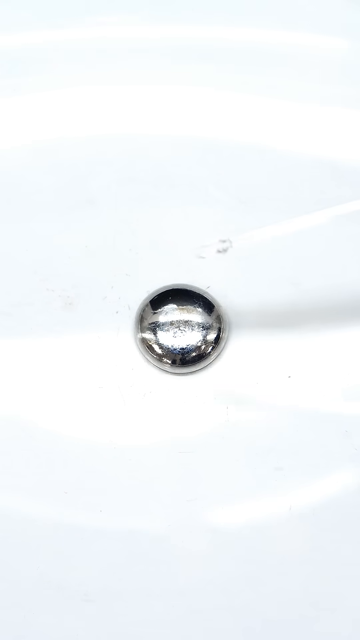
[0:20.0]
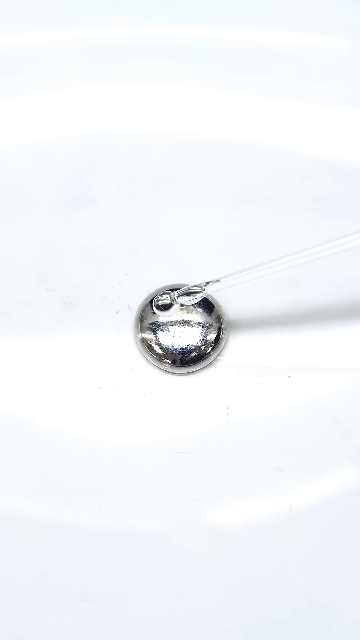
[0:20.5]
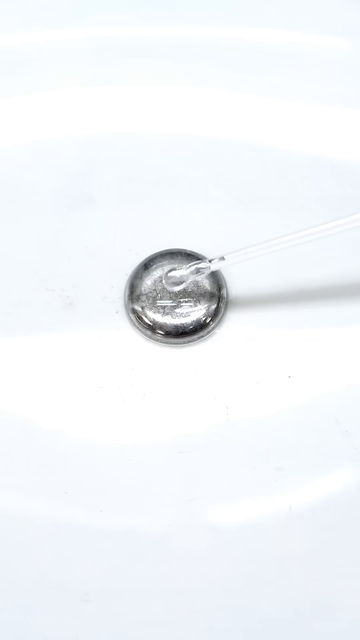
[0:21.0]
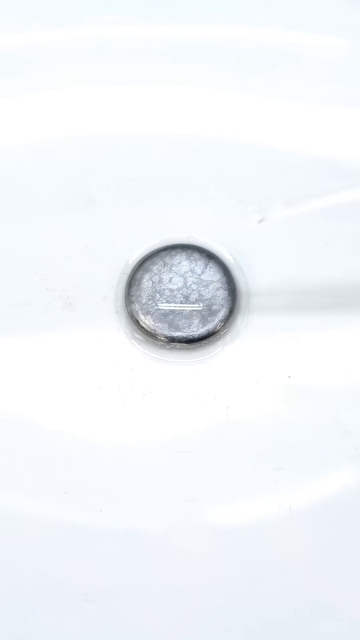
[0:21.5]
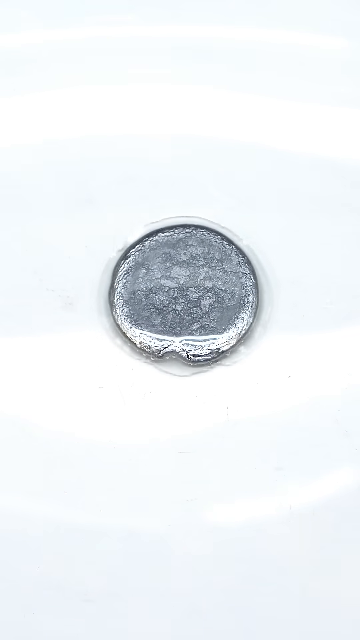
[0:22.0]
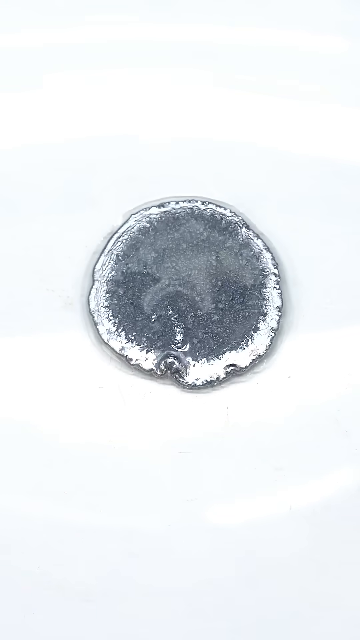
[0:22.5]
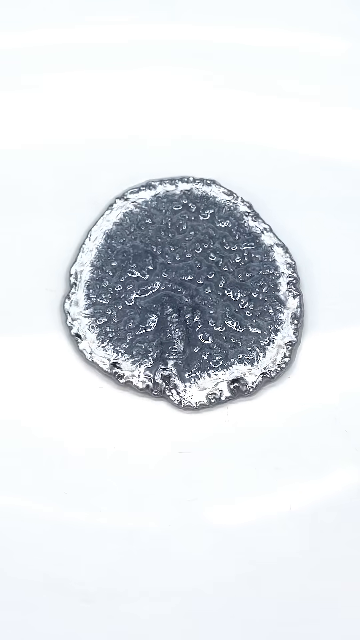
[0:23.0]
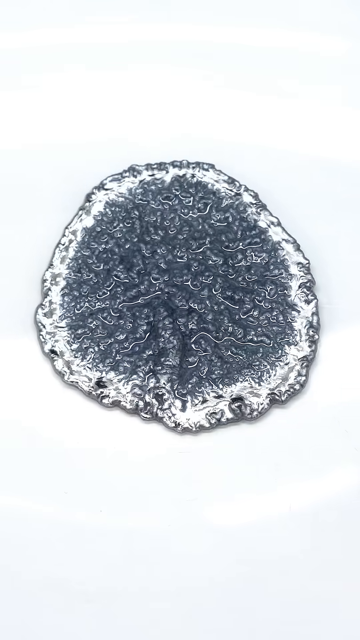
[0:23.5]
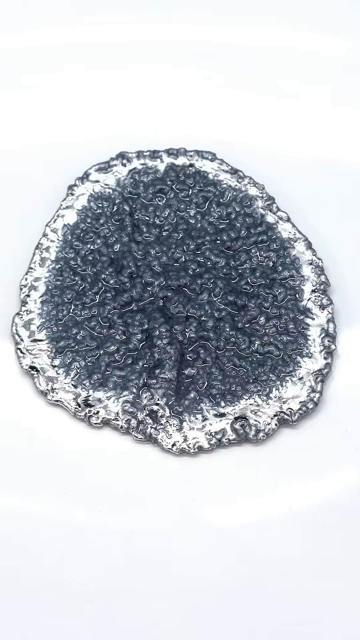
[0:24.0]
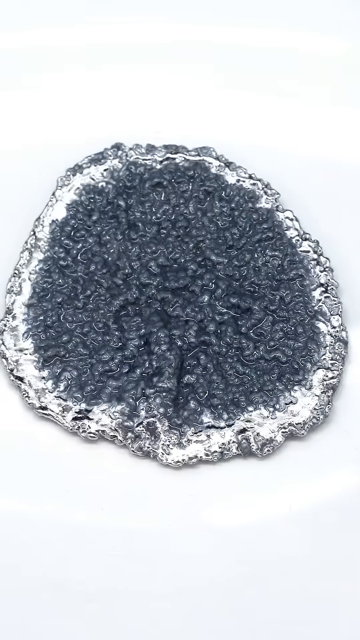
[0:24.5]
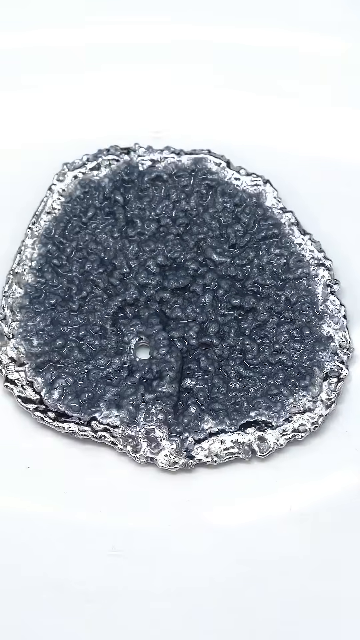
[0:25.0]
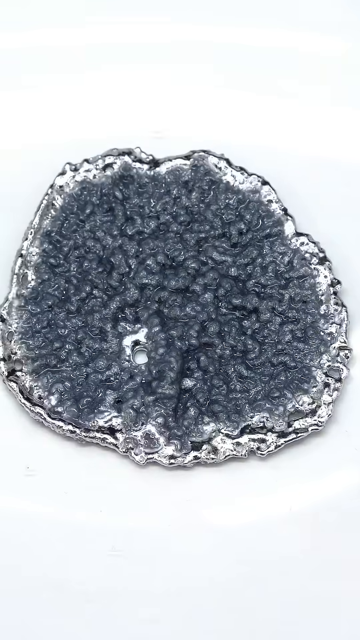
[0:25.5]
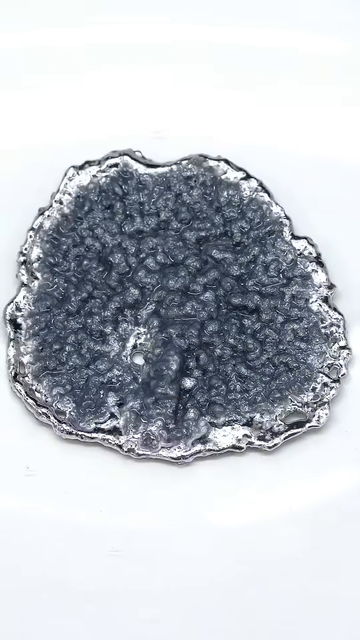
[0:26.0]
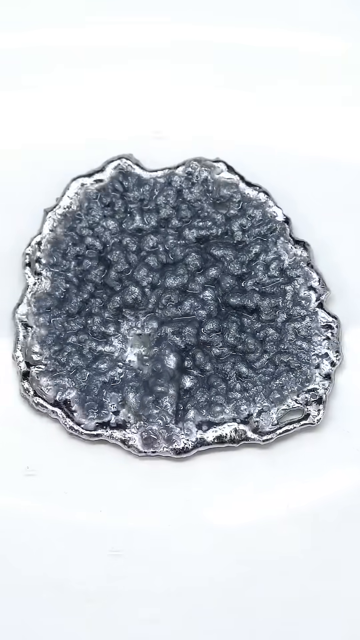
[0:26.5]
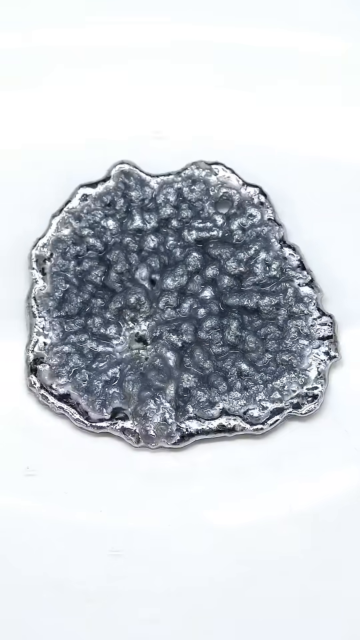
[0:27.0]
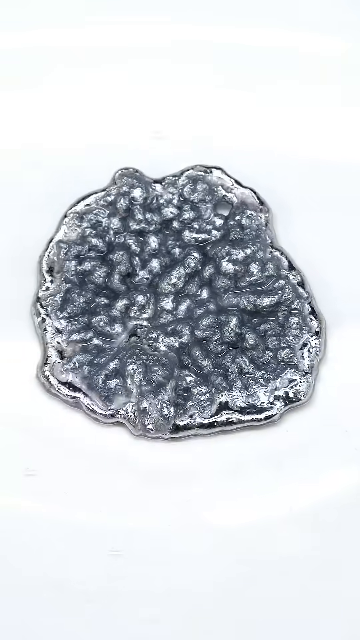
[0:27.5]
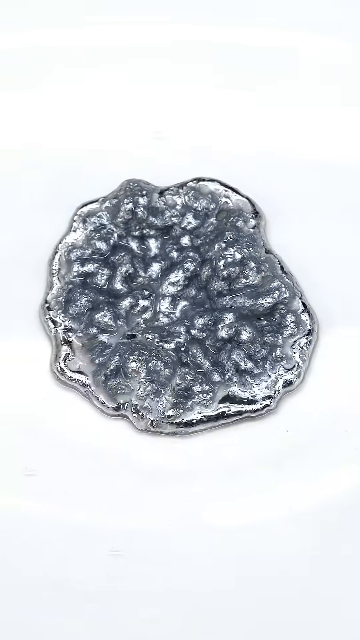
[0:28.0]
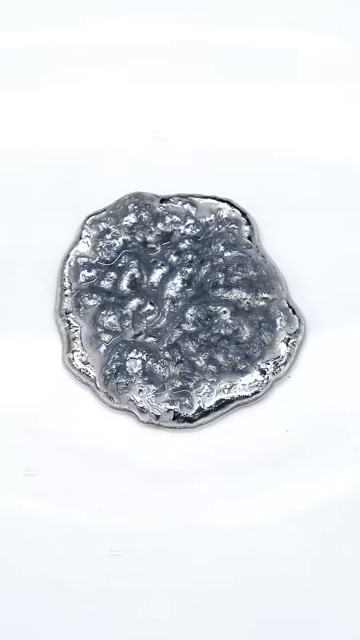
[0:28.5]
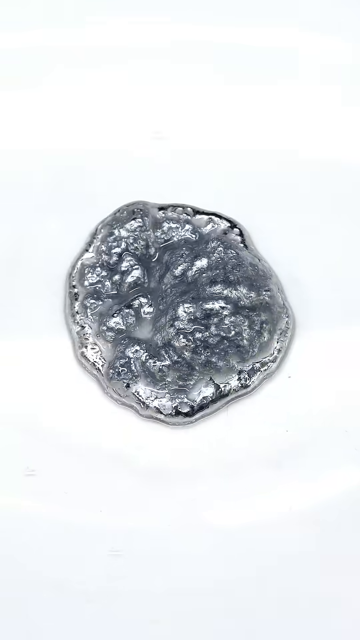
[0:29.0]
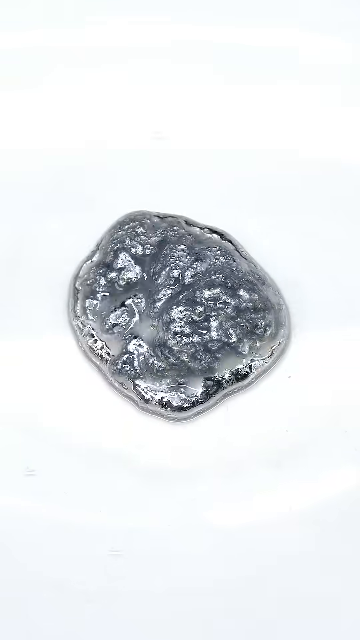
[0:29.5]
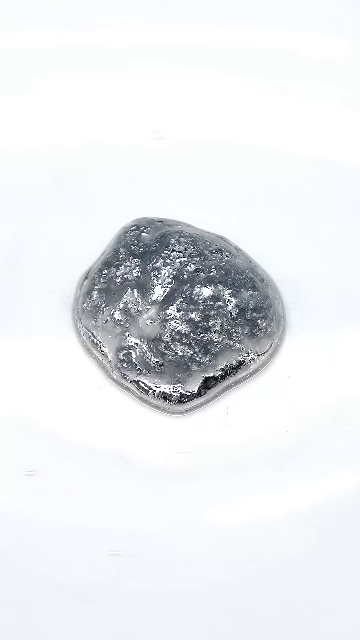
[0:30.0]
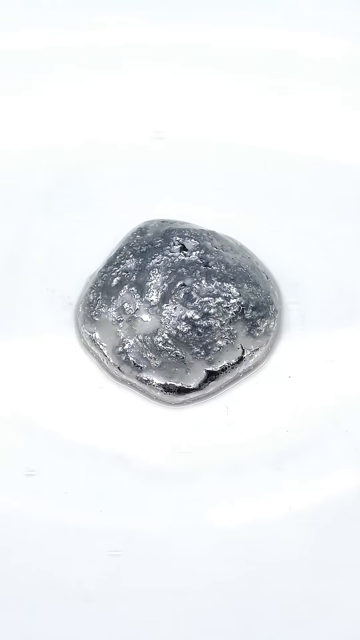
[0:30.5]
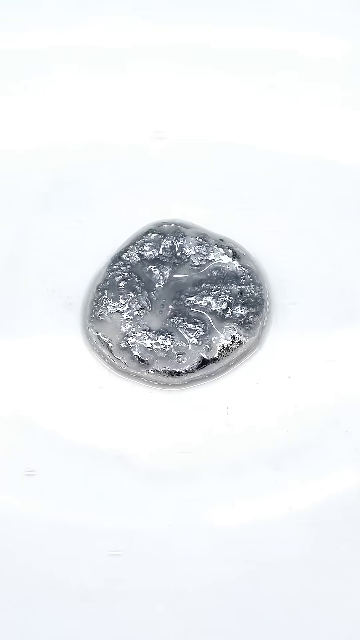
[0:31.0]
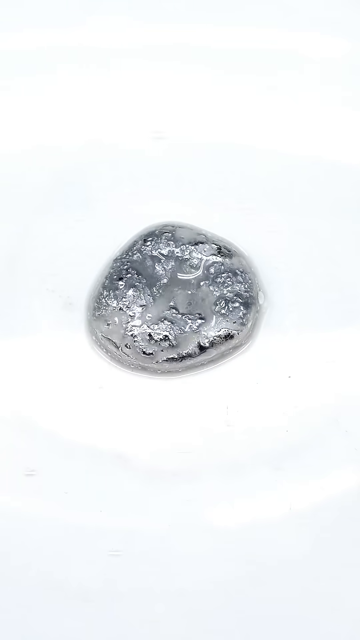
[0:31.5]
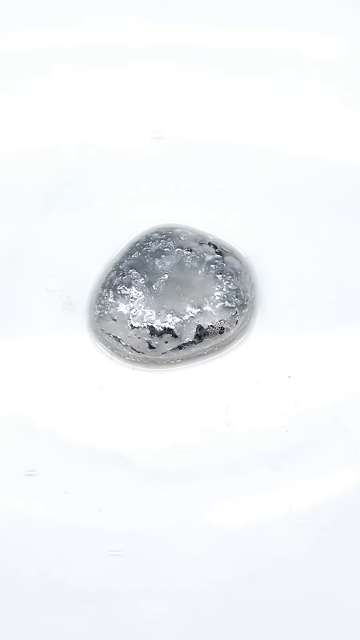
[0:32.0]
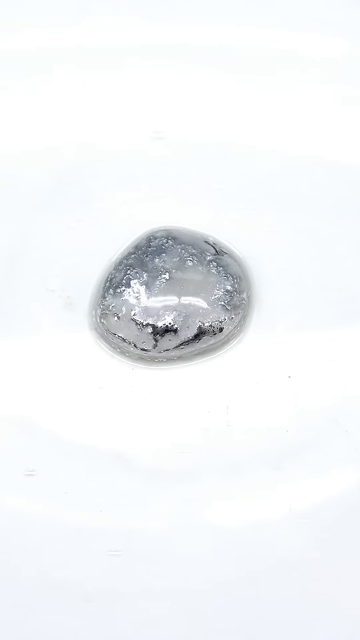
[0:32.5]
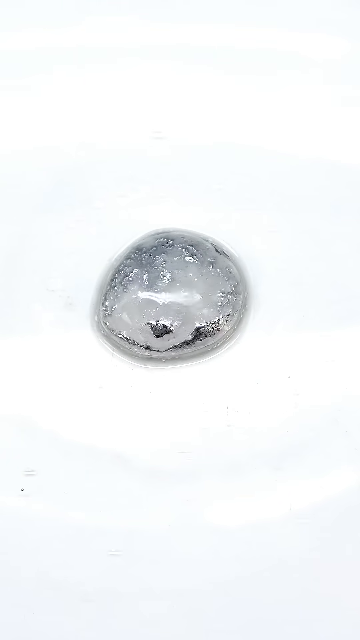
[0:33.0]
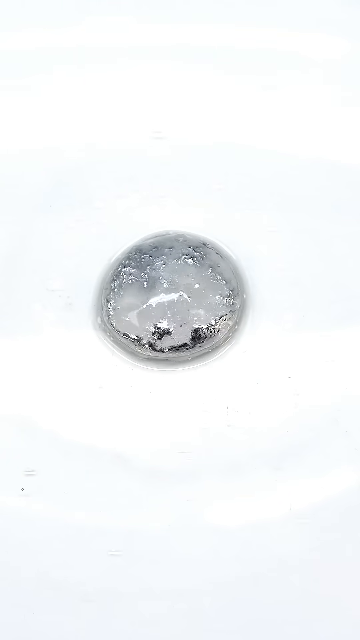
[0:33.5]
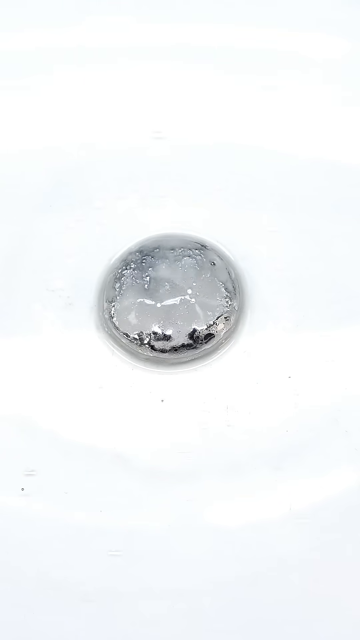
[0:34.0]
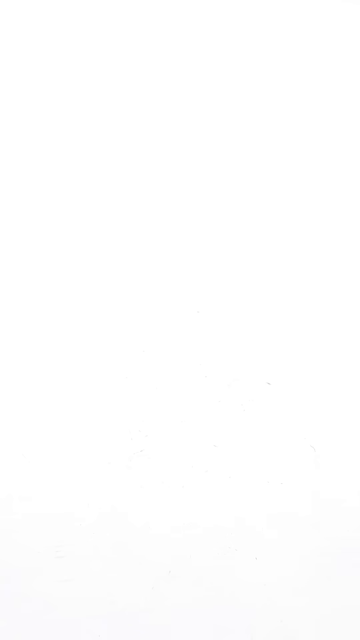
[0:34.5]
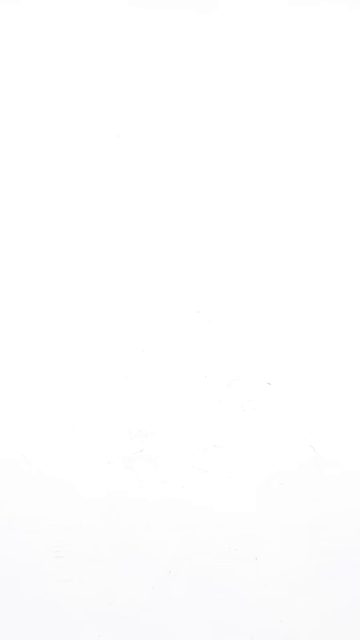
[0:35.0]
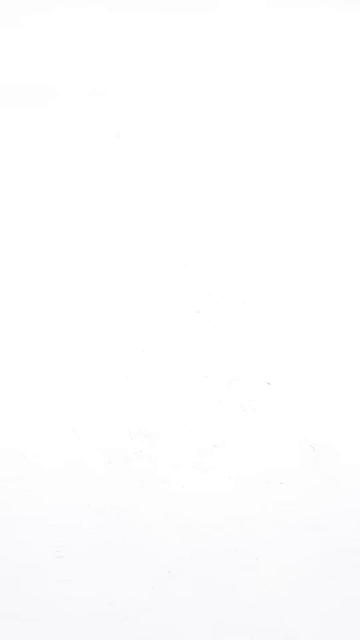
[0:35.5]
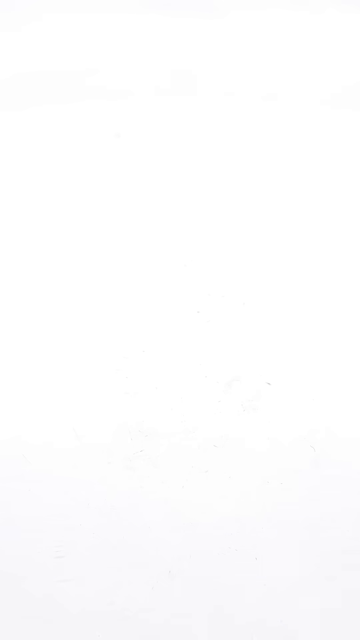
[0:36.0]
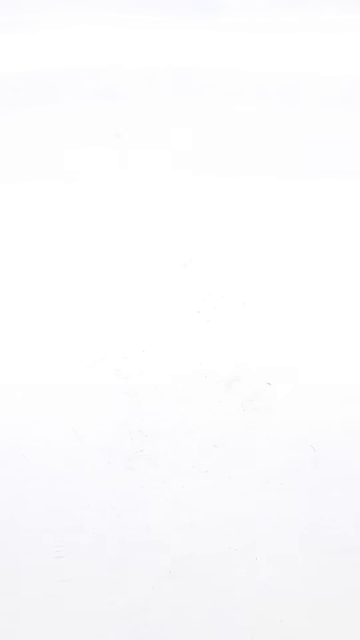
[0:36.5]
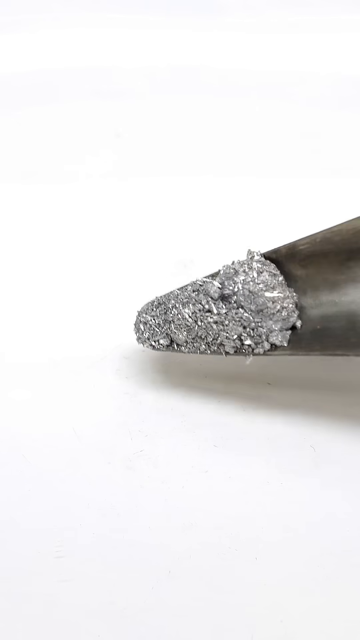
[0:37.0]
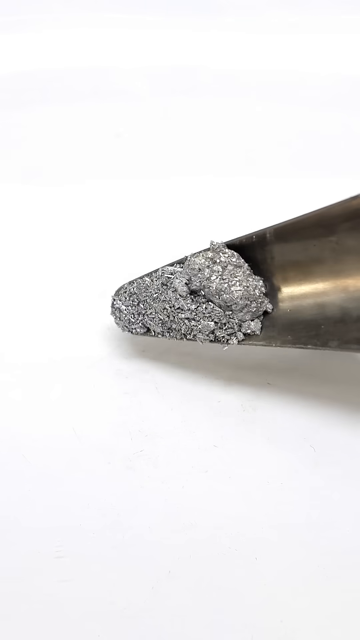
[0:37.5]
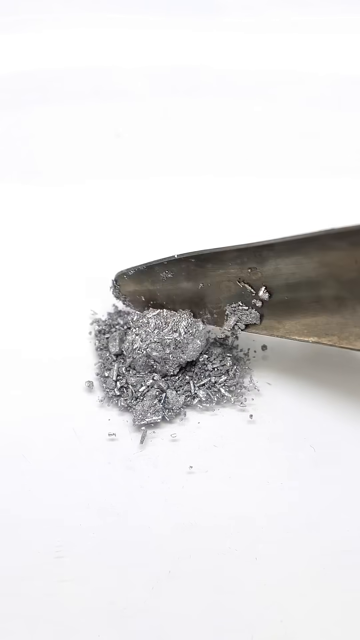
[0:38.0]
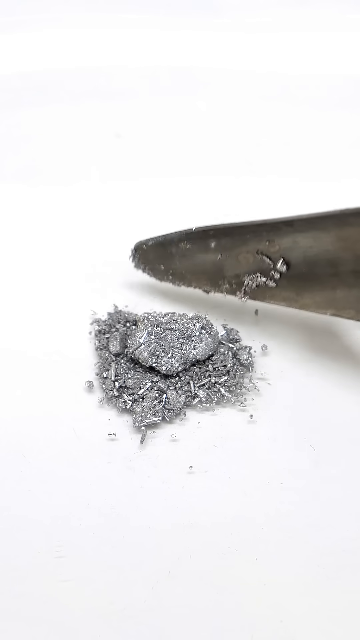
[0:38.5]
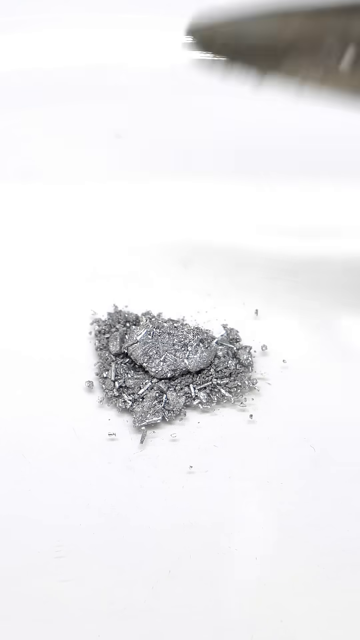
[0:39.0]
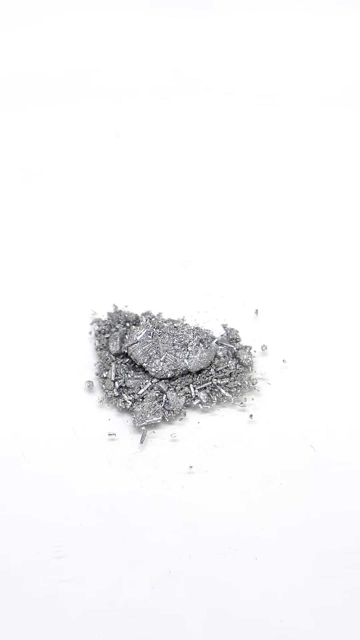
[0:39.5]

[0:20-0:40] A drop of mercury expands into something and then folds back into a drop. It appears that something was added to the mercury that made it expand and move erratically before it formed back into a drop. No person is visible, not even a hand. The setting appears to be indoors, as the light looks artificial and very uniform.